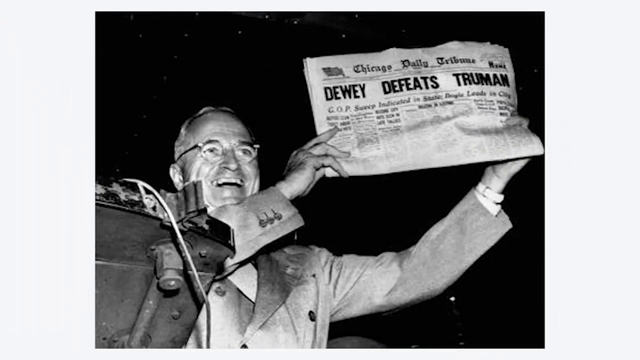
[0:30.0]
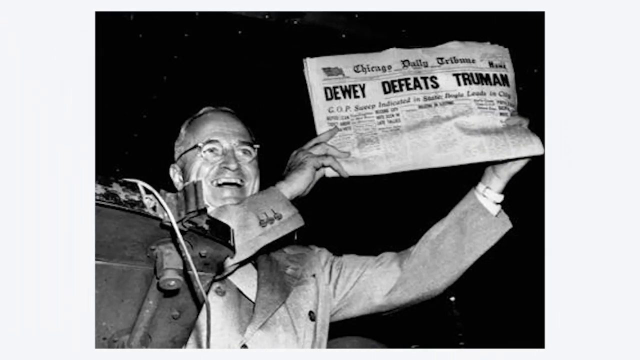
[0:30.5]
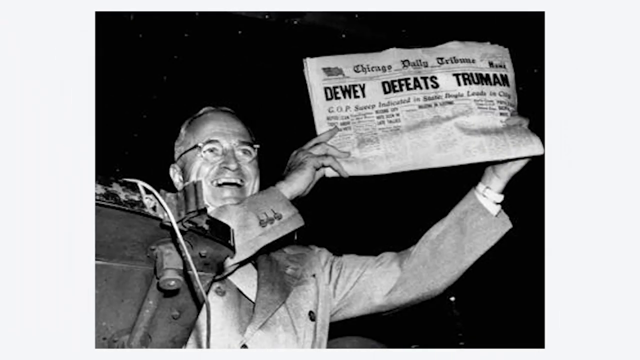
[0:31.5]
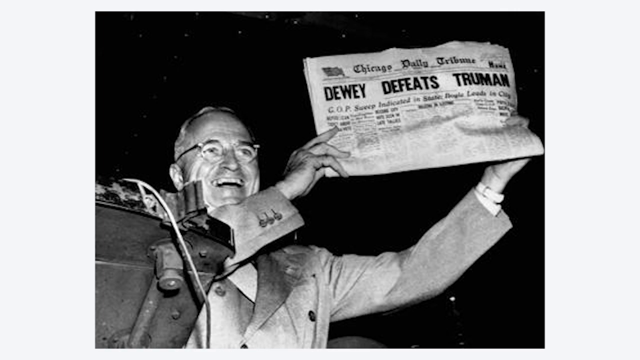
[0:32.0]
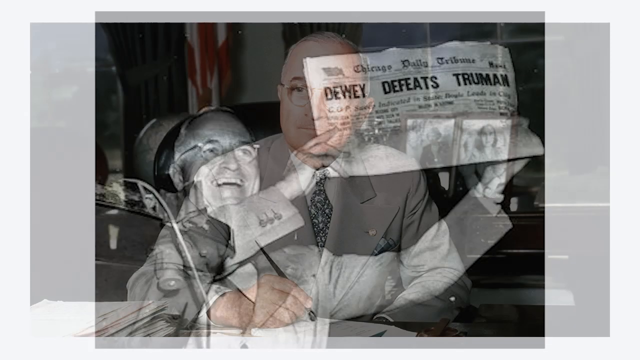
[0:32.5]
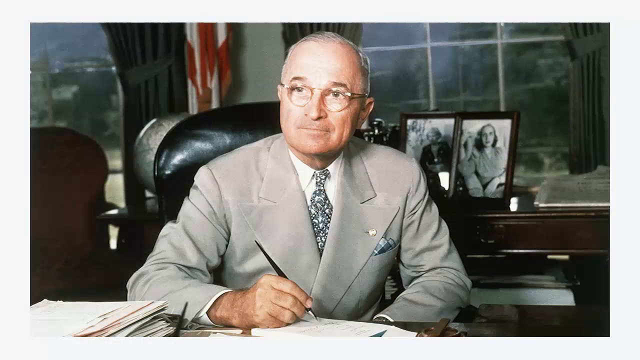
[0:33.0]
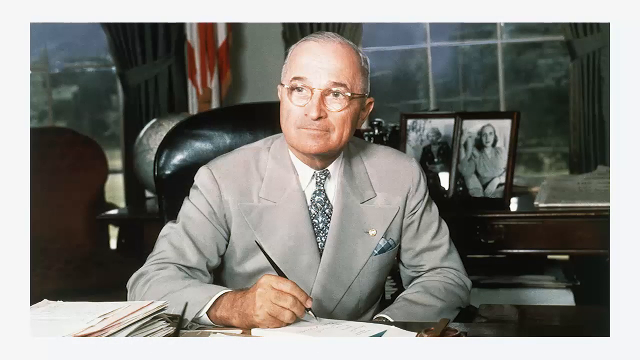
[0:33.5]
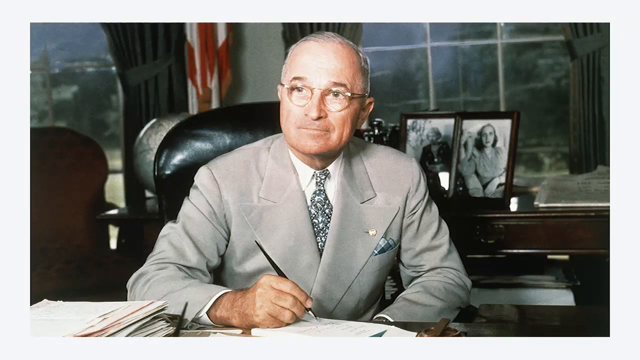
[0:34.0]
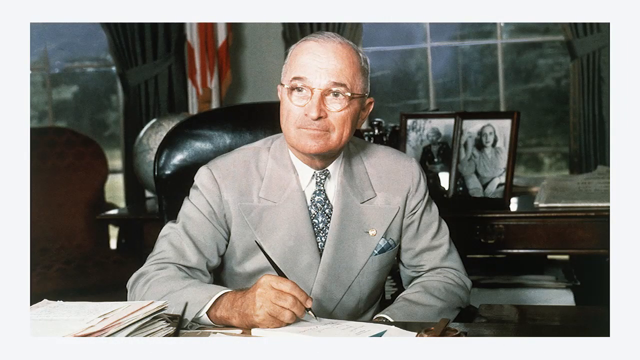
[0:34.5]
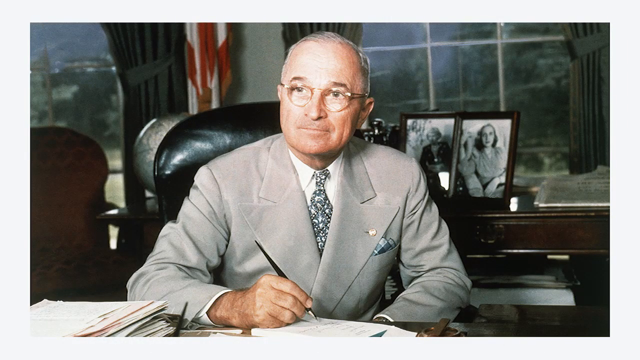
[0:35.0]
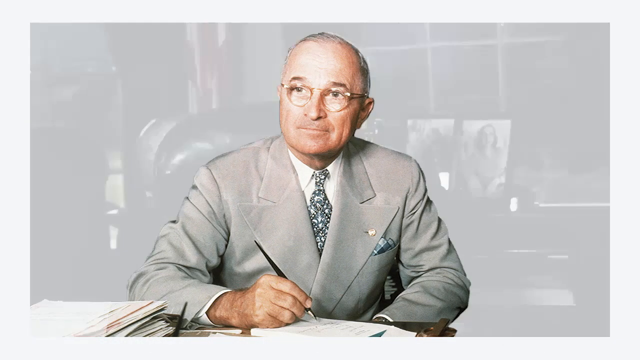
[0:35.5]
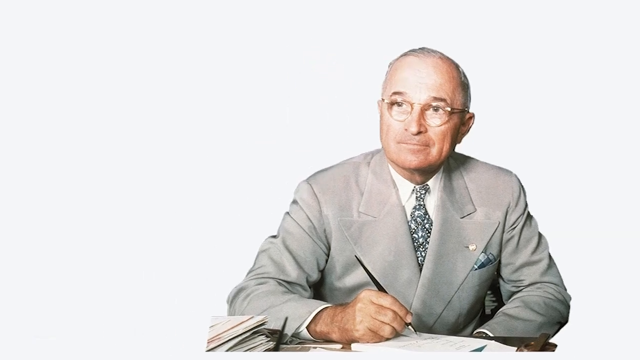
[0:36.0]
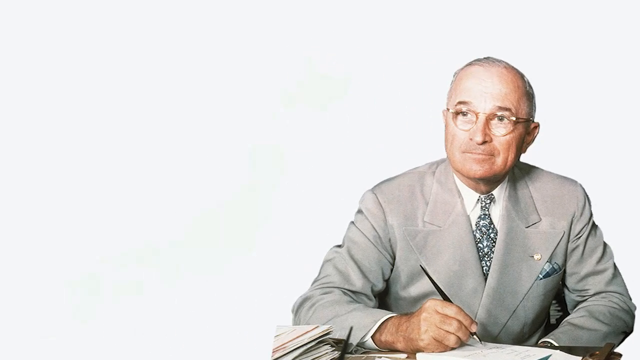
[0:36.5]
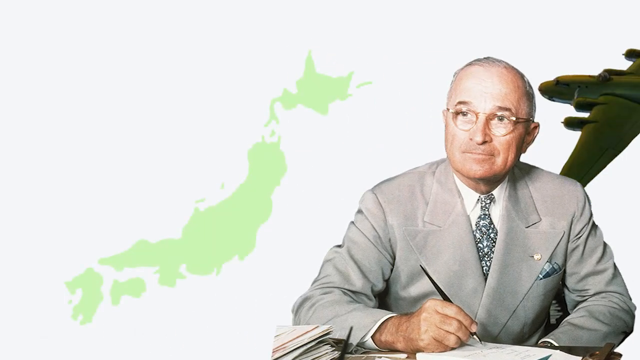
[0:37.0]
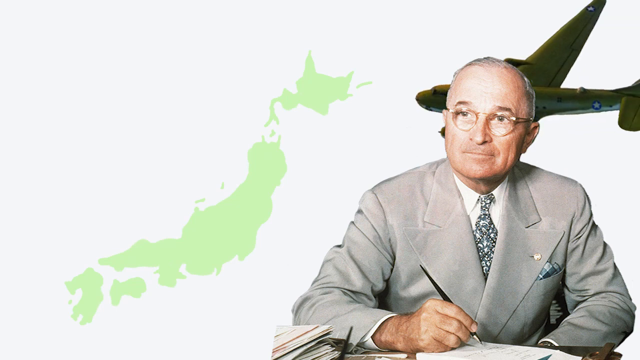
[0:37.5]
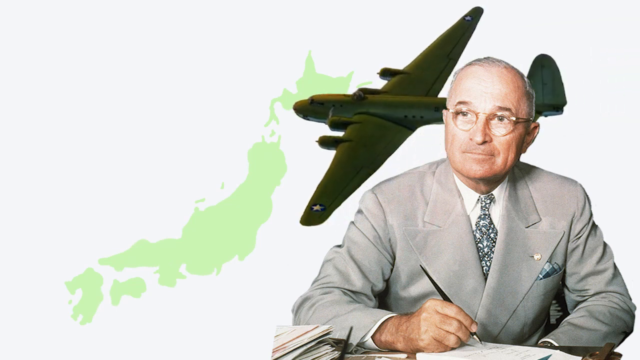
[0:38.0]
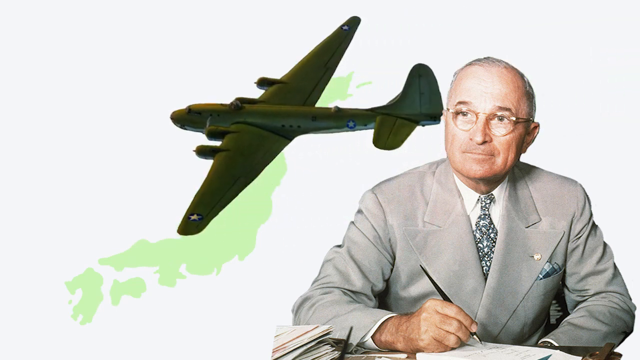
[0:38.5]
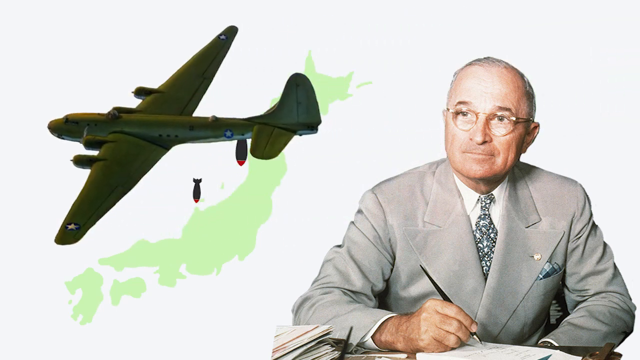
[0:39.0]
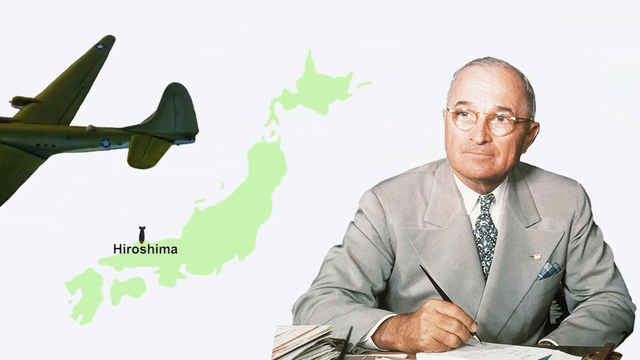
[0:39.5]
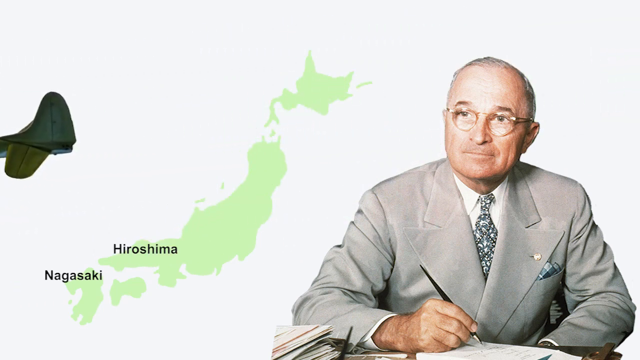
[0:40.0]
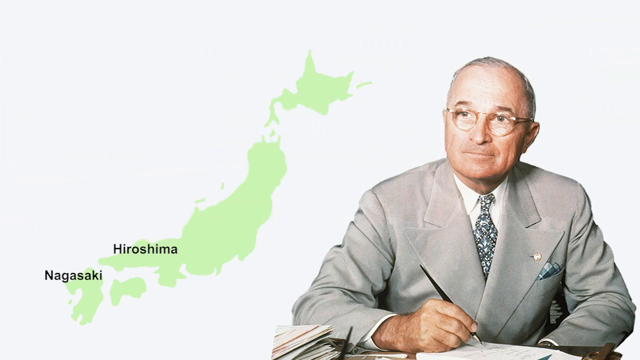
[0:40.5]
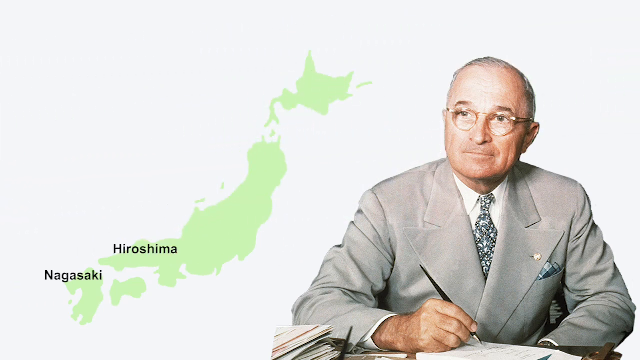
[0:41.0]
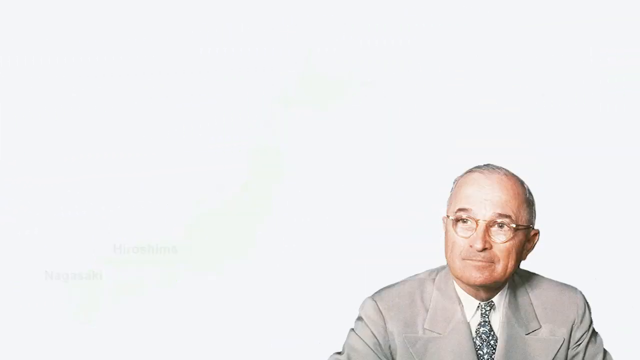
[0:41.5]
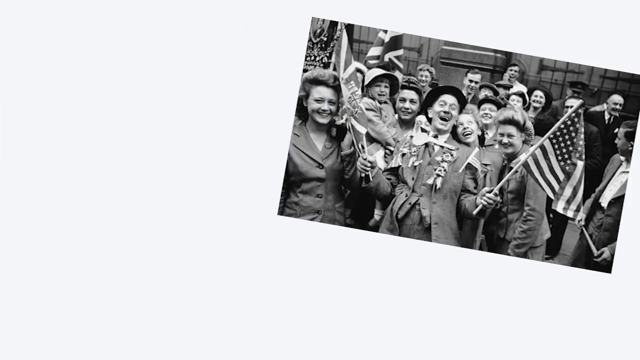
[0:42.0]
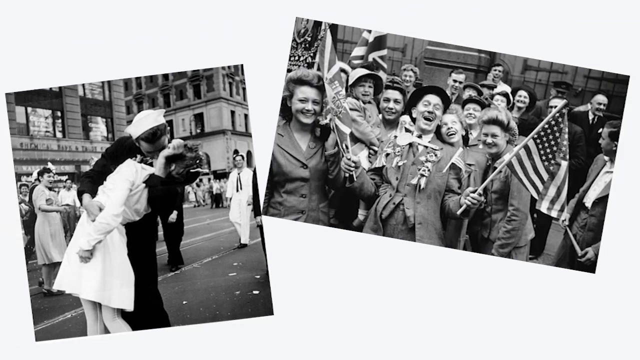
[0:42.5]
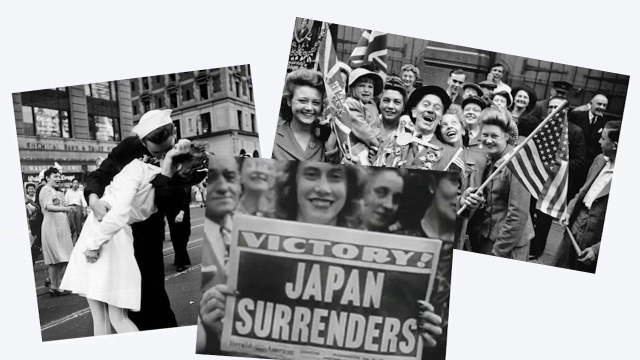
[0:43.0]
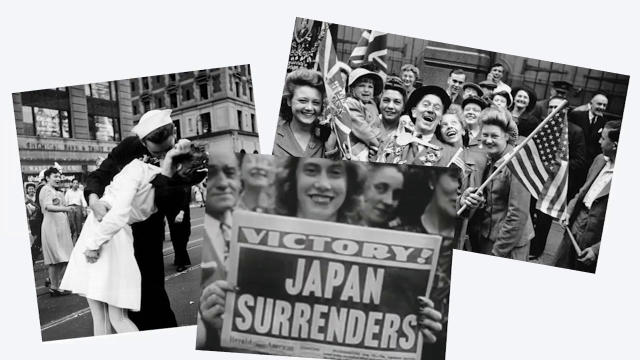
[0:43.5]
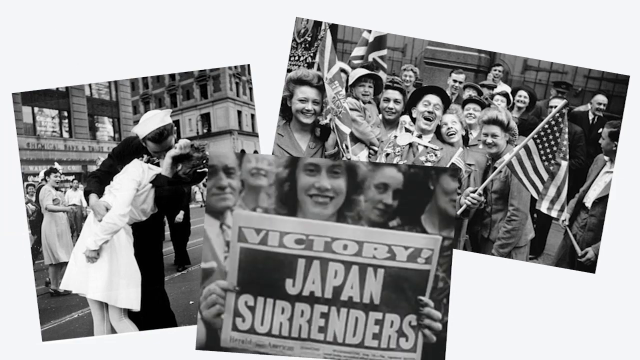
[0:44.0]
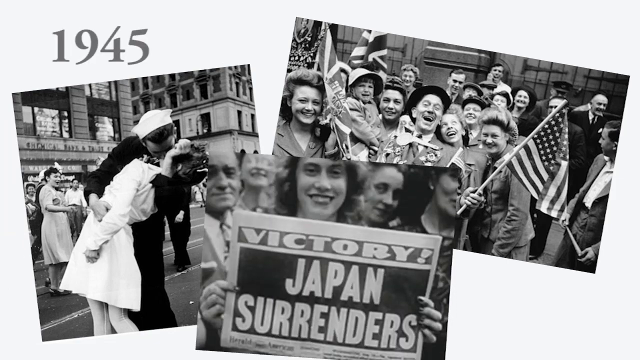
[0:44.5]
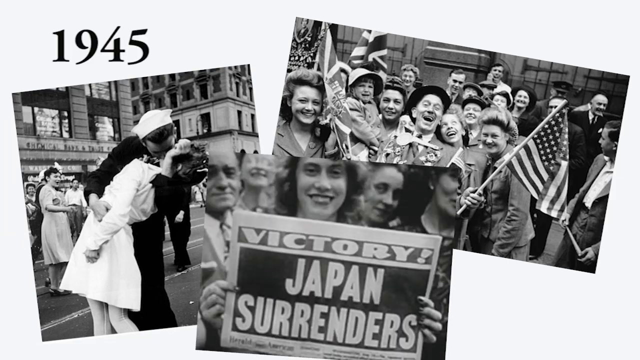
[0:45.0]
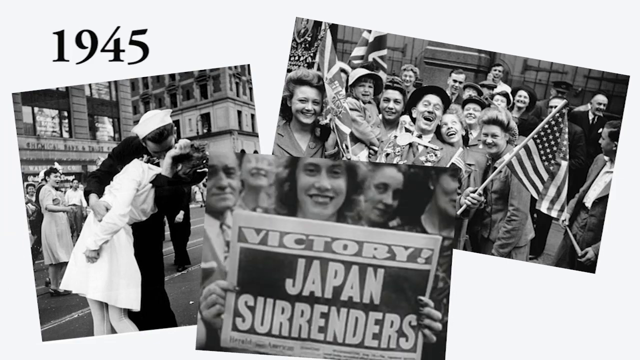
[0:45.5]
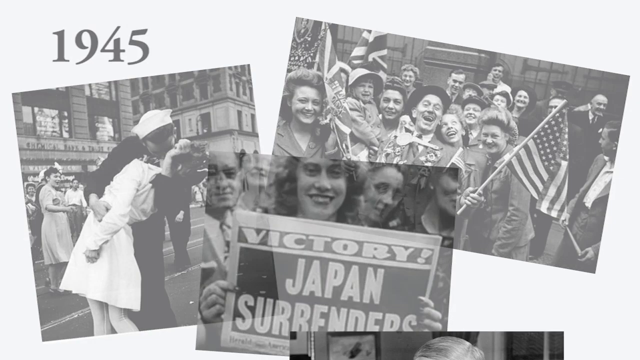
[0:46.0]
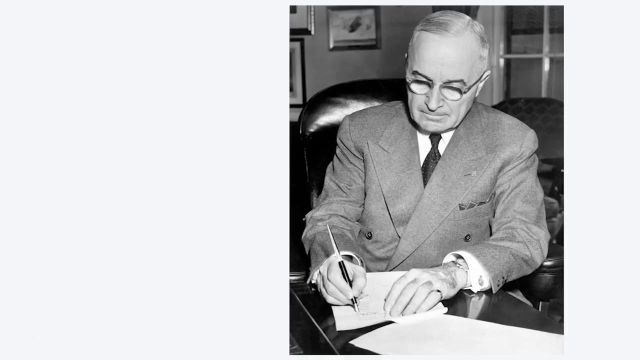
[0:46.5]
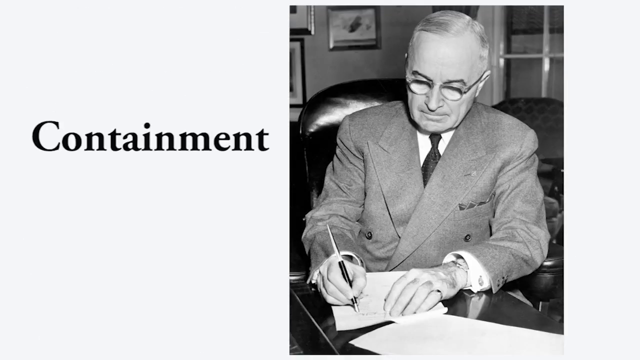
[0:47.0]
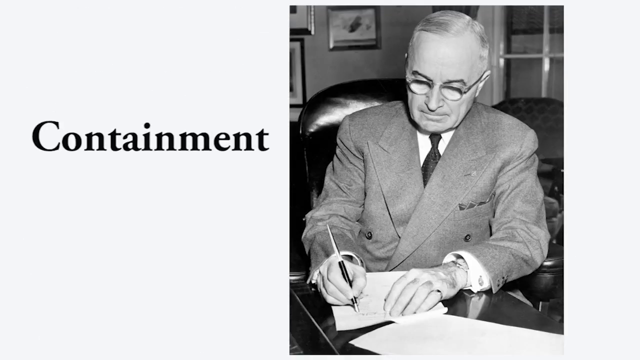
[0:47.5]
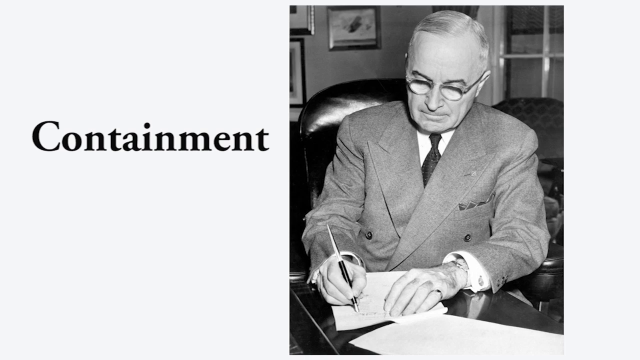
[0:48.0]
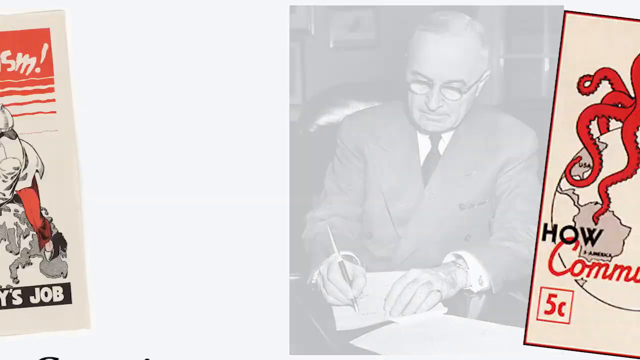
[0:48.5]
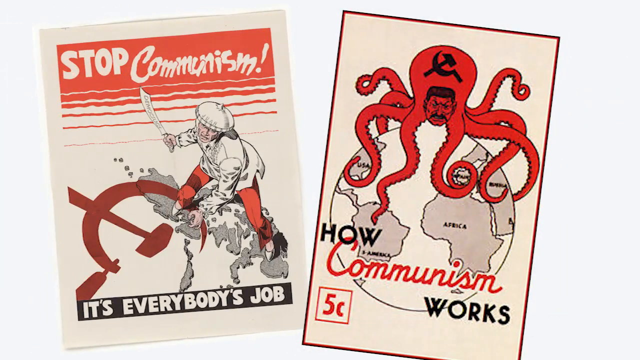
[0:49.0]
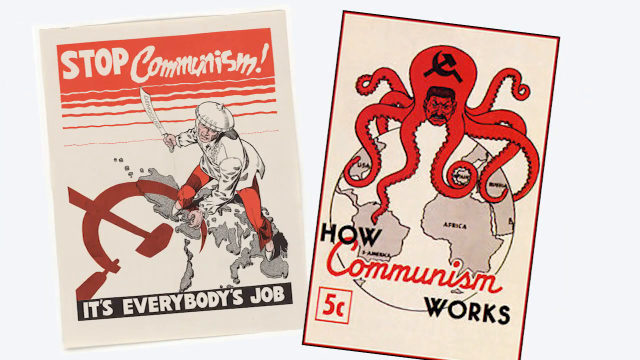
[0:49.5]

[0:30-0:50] The image of Harry Truman holding up the "Dewey Defeats Truman" newspaper is on screen. He has a big smile on his face and wears a suit jacket, holding the paper up with both hands off to his left side so his face is visible. Next is a color photograph of Truman sitting at what is apparently the Resolute Desk in the Oval Office of the White House. Behind him are photographs of what look like two women. He holds a pen but looks slightly away from the camera, and there is an American flag and a window in the background. He looks like he is sitting in a comfortable leather chair, and he wears a colorful tie with a handkerchief in his pocket. The image of him is then kind of cut out from its background: the background disappears, Truman moves to the right, and a green map of Japan appears. From the right, a bomber, some sort of military plane, comes and drops two nuclear warheads on Hiroshima and Nagasaki. Those images go away and celebratory photos of the end of World War II appear: someone holding an American flag with some British flags in the background, apparently not Americans; the picture of a Navy sailor kissing a woman; and another woman holding a newspaper that says "Victory. Japan surrenders." The date "1945" then appears. Truman appears again in a photo along with the word "Containment." Political cartoons depicting communism negatively then appear: one about the Philippines reading "Stop Communism, It's Everyone's Job," with a man with a knife or machete standing on the Philippines, and a poster reading "How Communism Works," showing an octopus with Stalin's face reaching its tentacles all over the world.